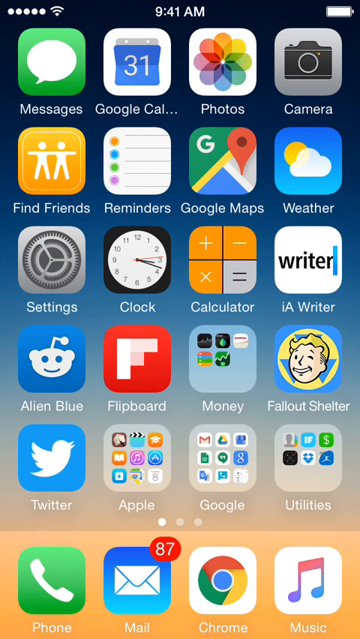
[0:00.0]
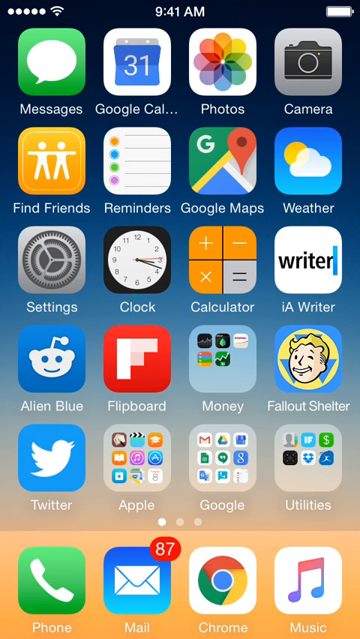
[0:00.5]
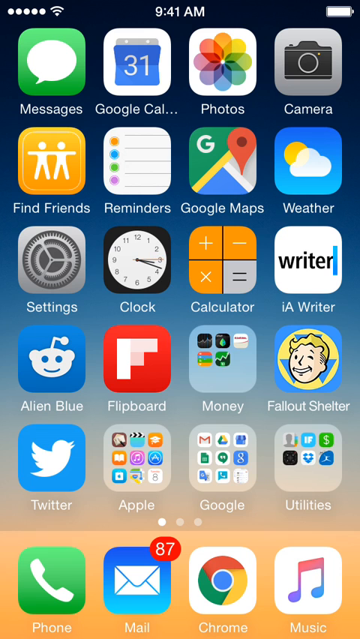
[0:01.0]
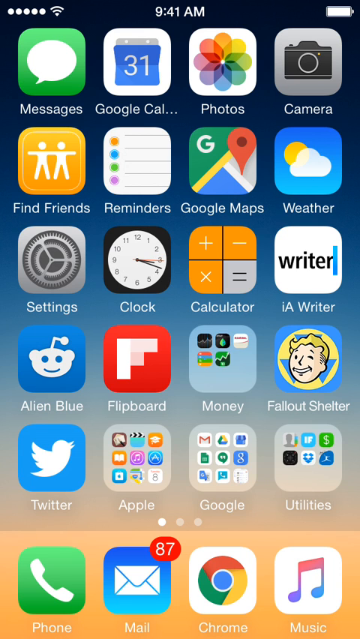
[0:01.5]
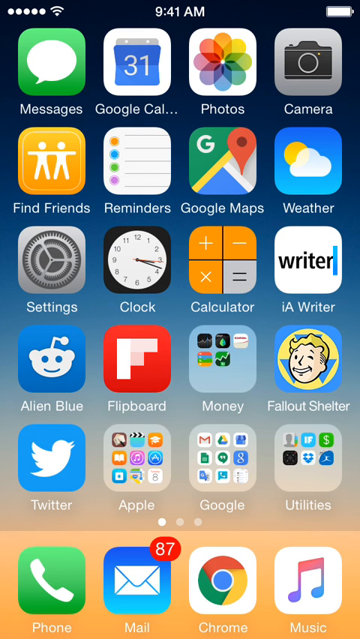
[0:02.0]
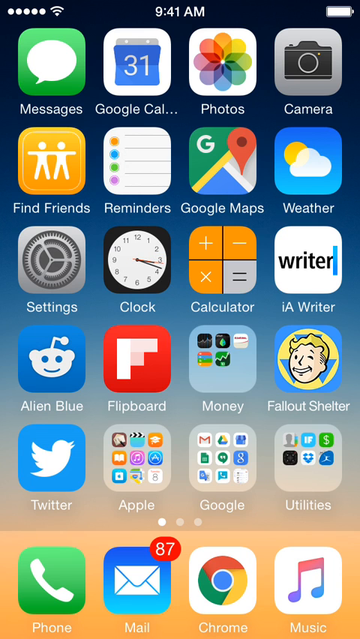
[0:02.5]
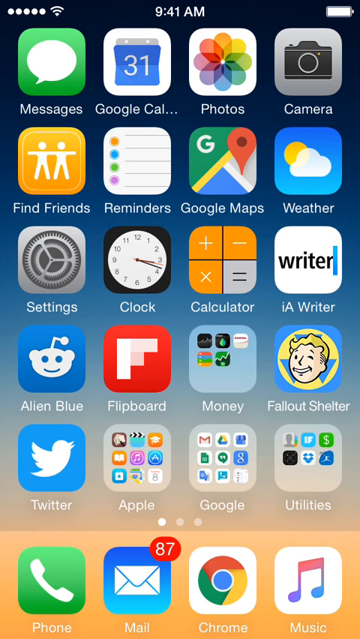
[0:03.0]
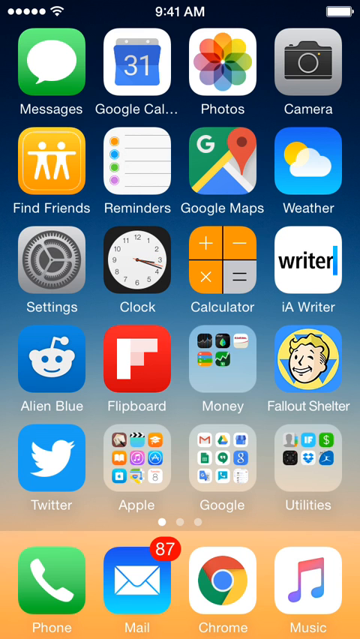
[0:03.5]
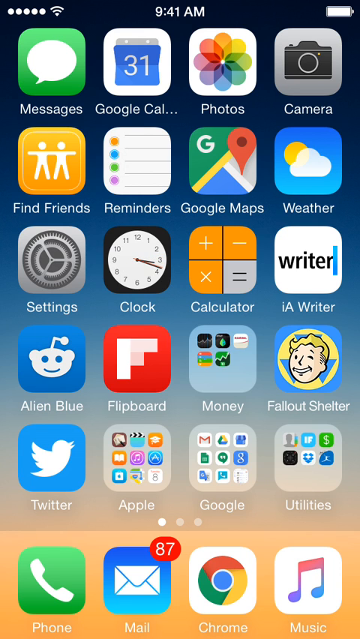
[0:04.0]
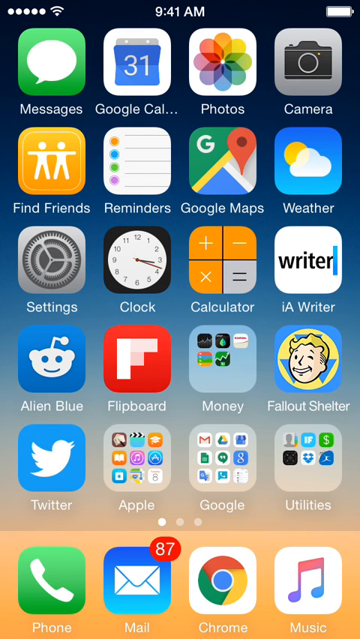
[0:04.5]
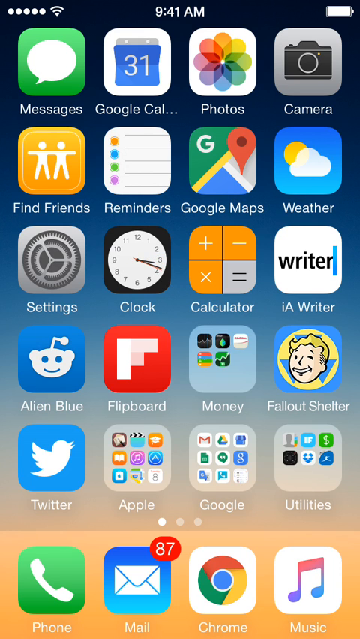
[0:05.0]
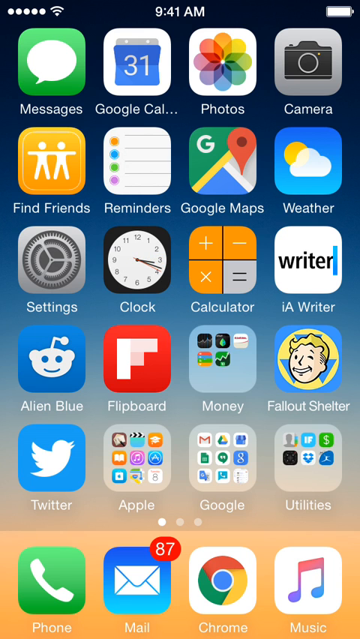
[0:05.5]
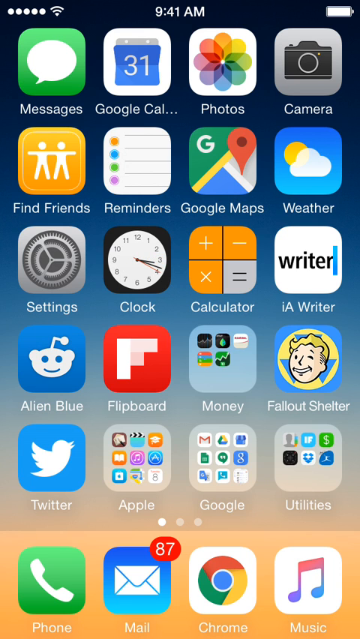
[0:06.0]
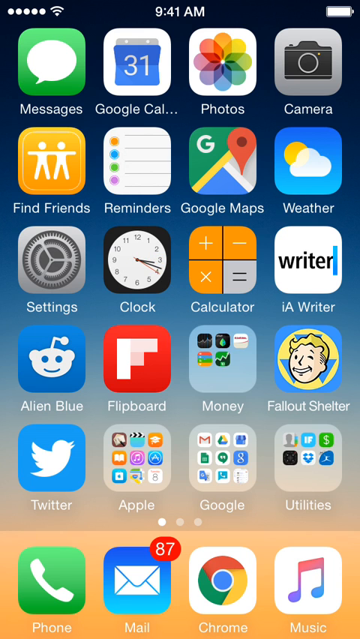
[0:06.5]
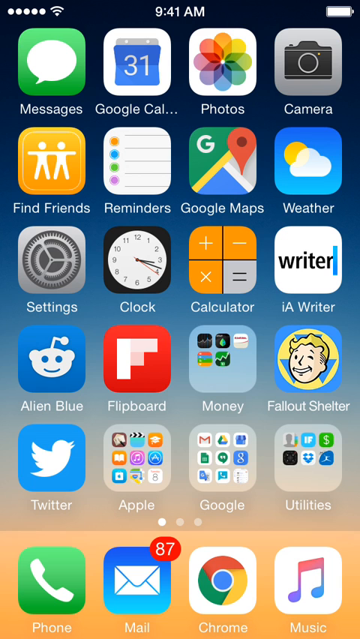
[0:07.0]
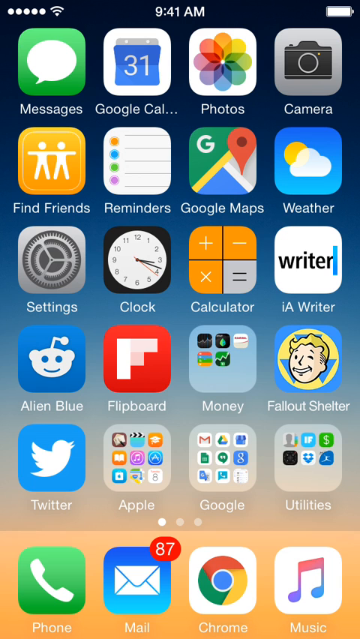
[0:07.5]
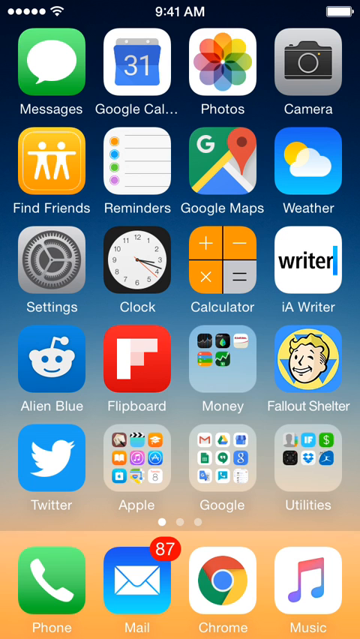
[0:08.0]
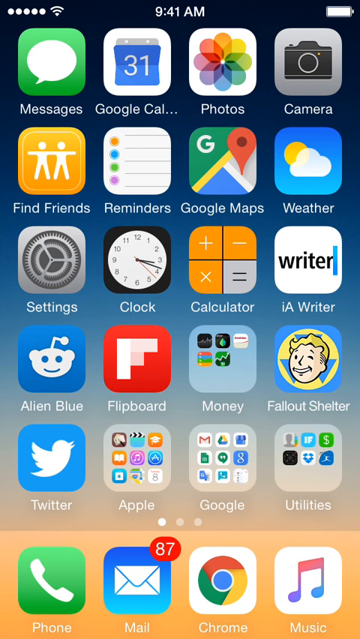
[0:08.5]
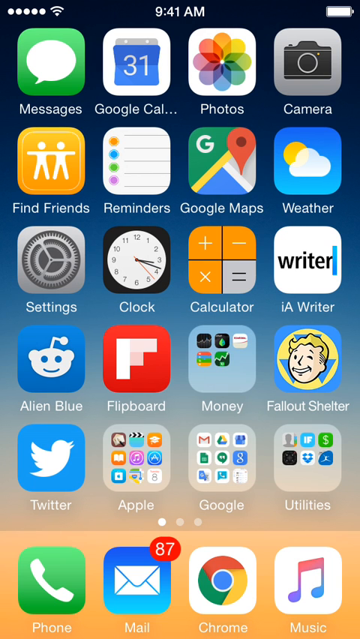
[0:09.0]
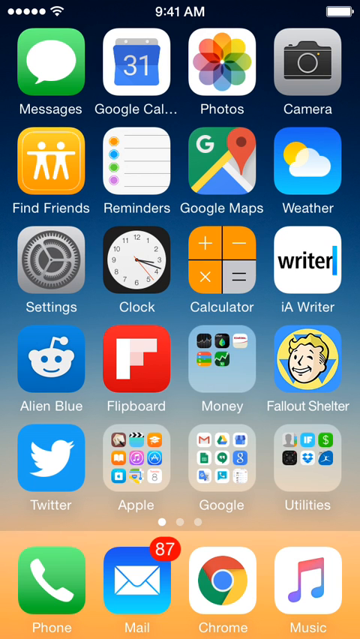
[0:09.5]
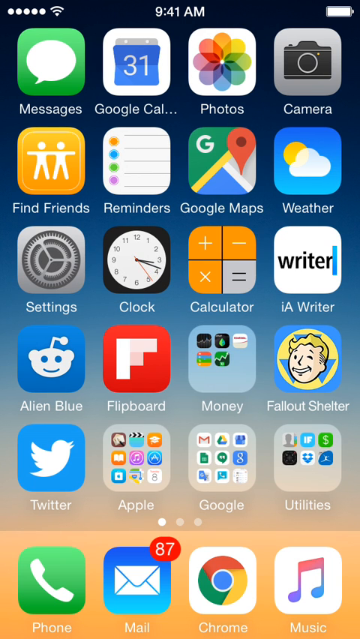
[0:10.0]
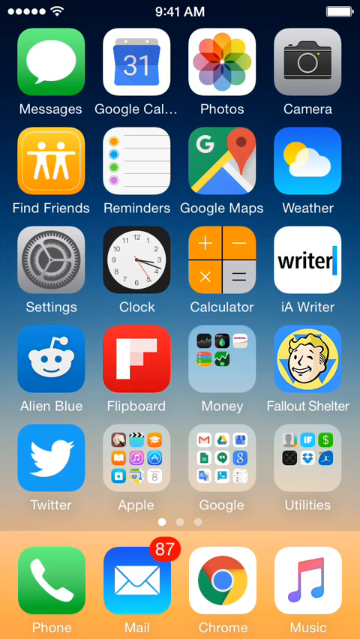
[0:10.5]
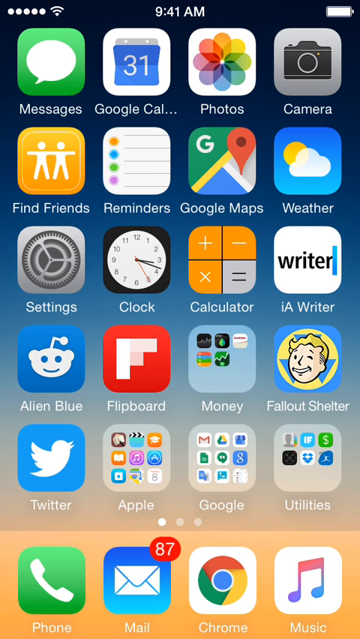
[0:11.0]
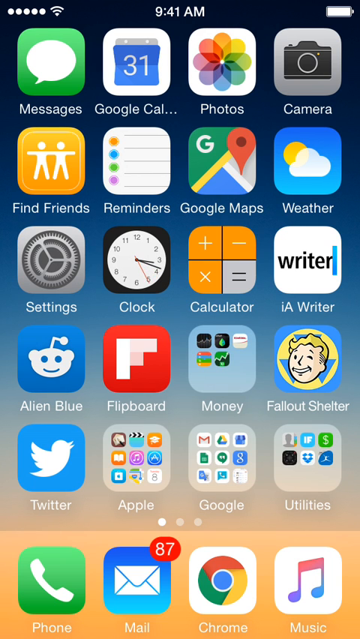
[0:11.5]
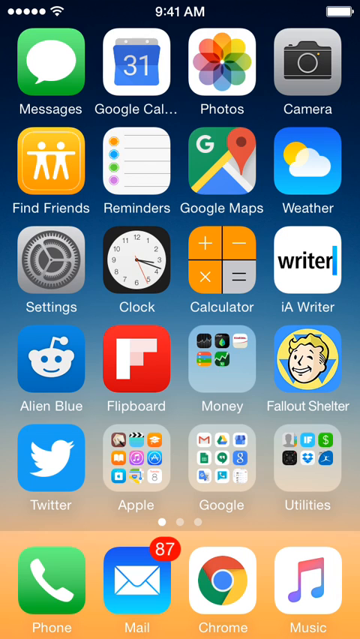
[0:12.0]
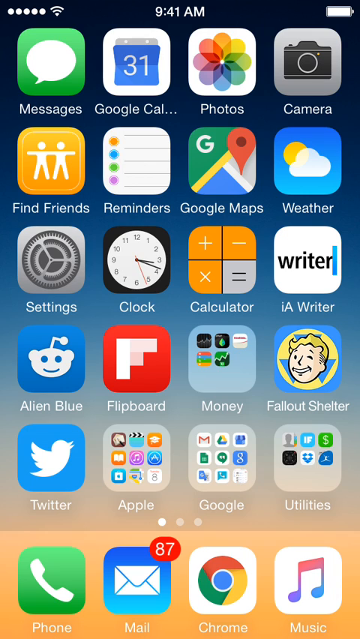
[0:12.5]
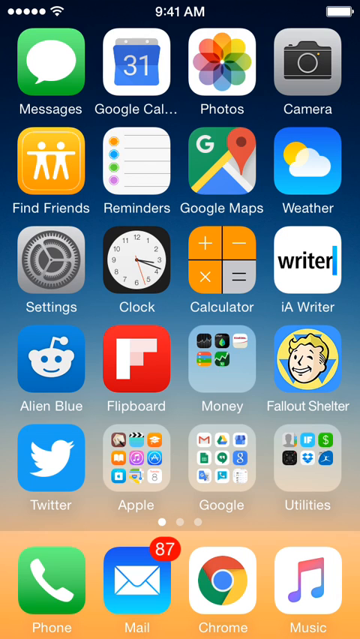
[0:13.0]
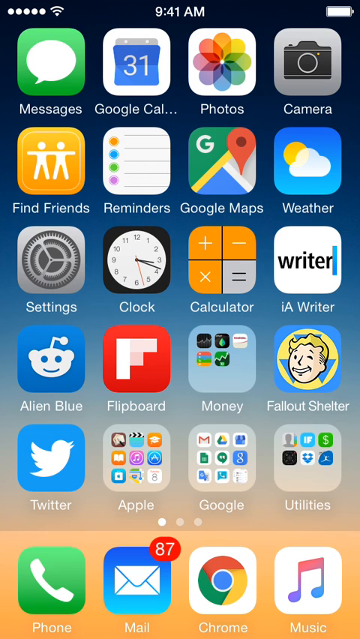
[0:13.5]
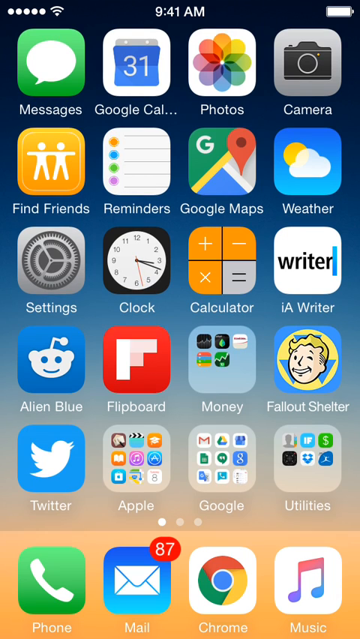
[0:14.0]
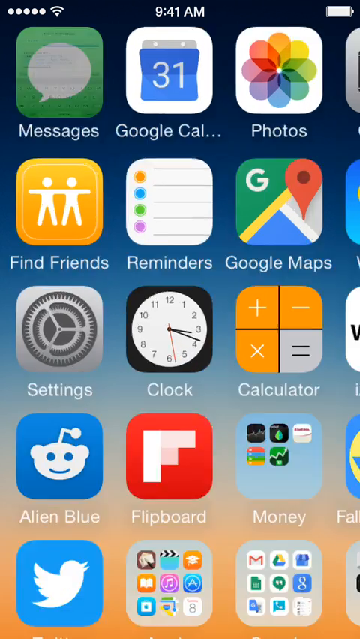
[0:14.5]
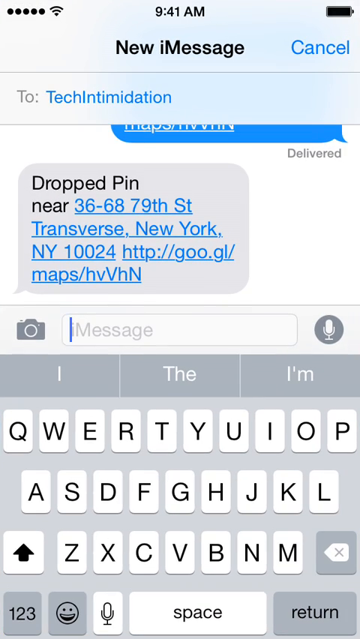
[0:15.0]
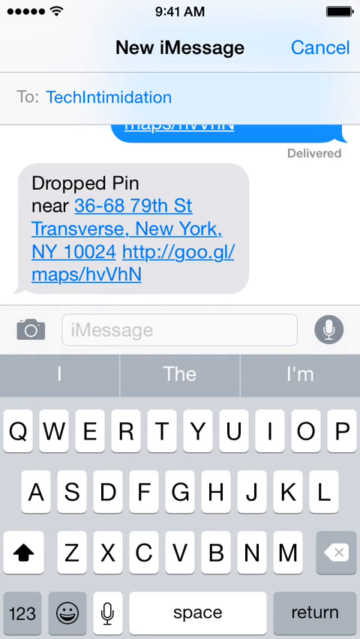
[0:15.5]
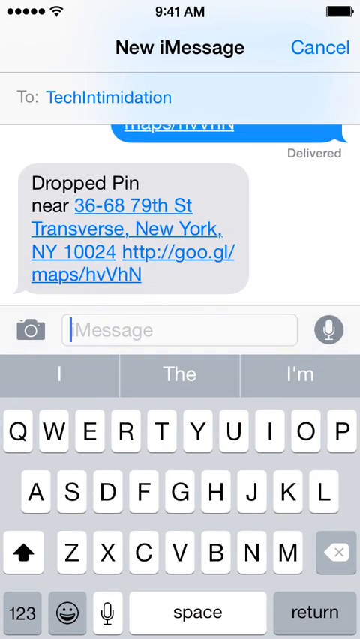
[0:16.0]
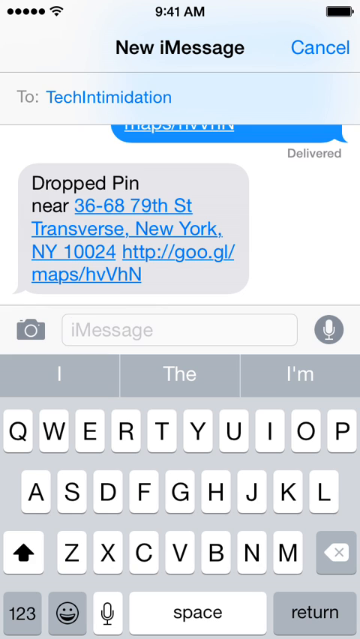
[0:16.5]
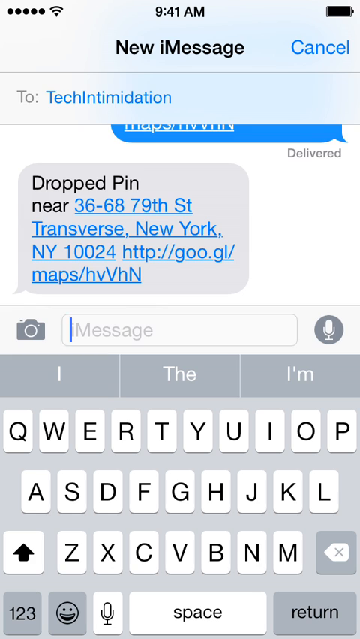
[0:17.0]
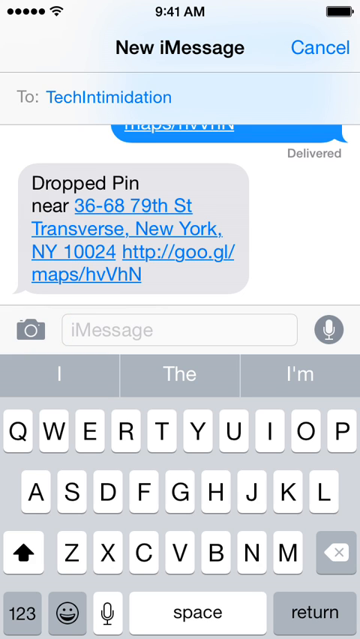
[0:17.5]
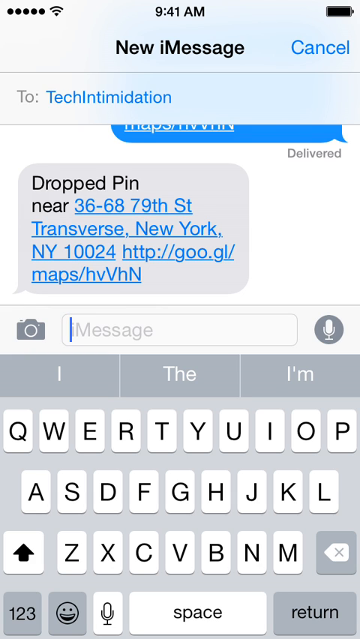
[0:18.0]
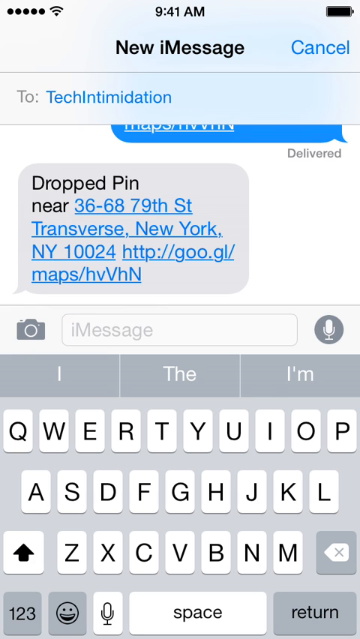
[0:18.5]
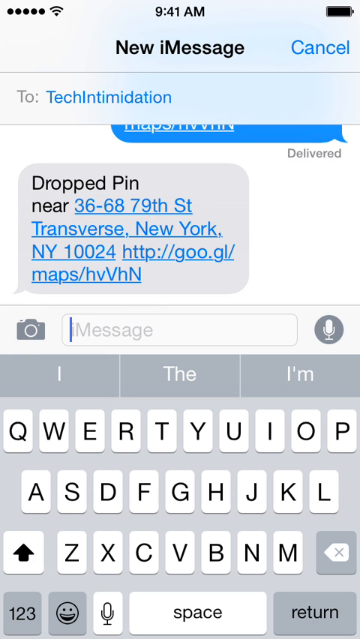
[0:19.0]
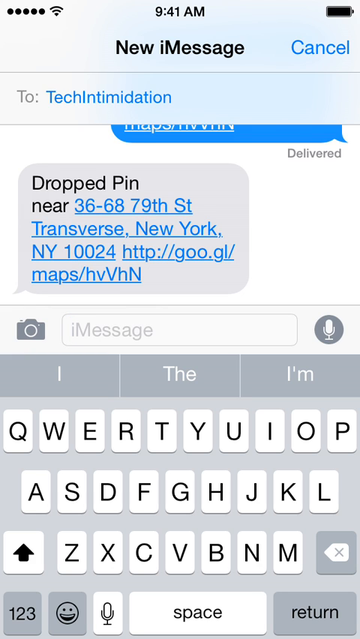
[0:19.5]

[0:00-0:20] A user's home screen is shown; it appears to be an Apple iPhone home screen rather than Android, judging by the style of the photos, messaging and settings icons and a few other apps. There are five rows of filled apps. At the bottom, below the apps, are the call button, the email app with 87 notifications, Google Chrome for the browser, and Apple Music. The view stays on the main screen for a bit. The user then opens the messaging app, showing a message they sent to a person called Tech Intimidation. Tech Intimidation has replied with "dropped pin near" and a pin of the address "3668 79th Street, Transverse, New York, New York 10024", along with a link, "http://goo.gl.maps.hvVHN".